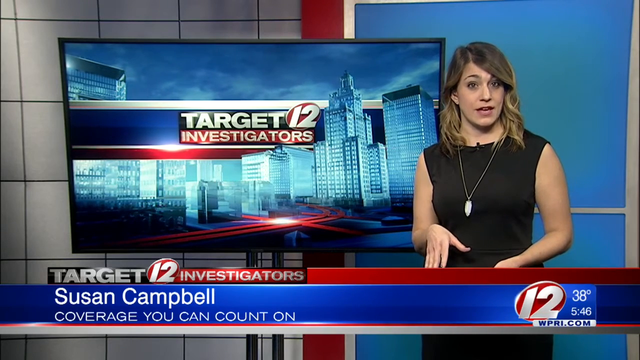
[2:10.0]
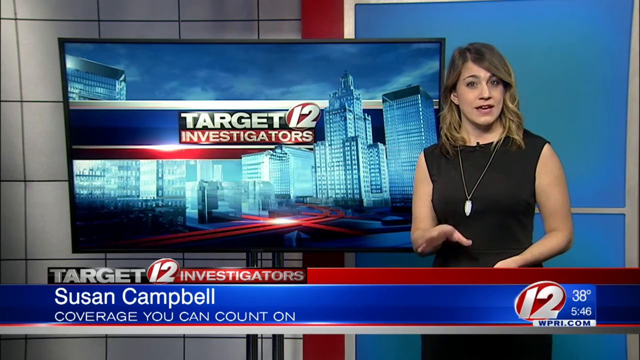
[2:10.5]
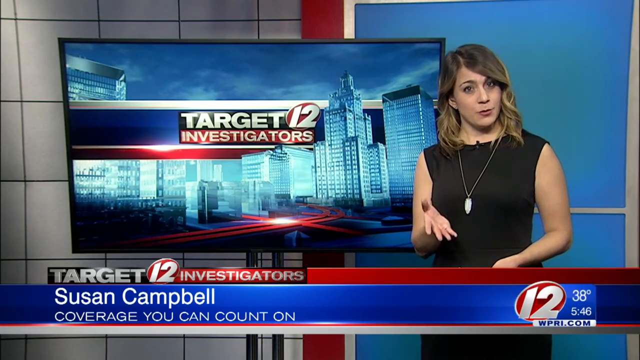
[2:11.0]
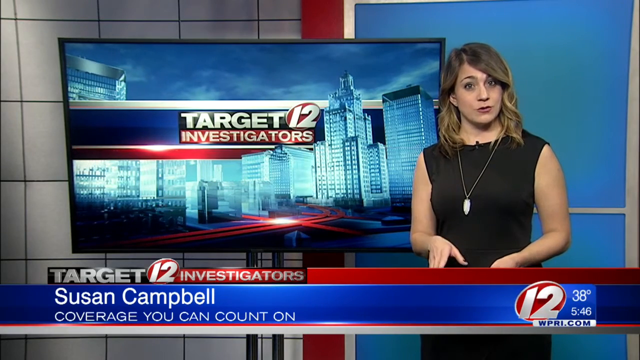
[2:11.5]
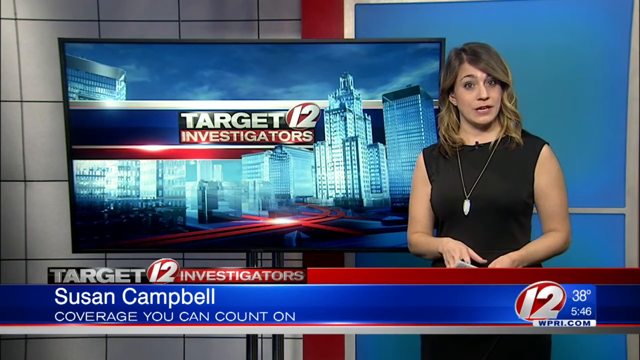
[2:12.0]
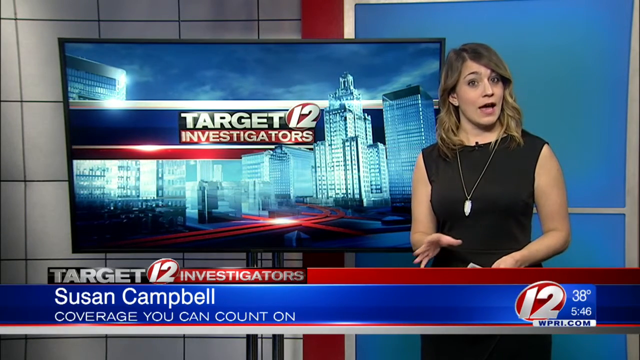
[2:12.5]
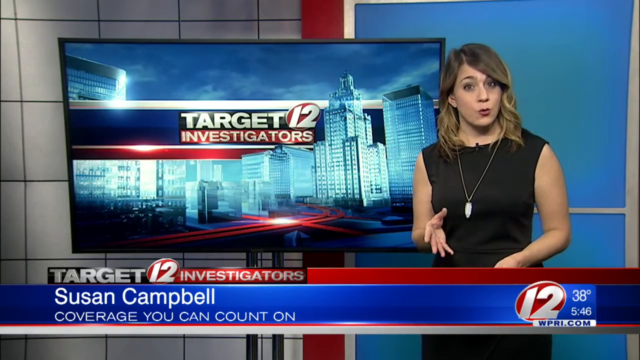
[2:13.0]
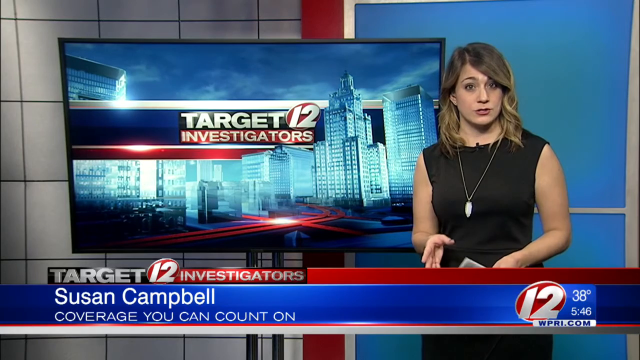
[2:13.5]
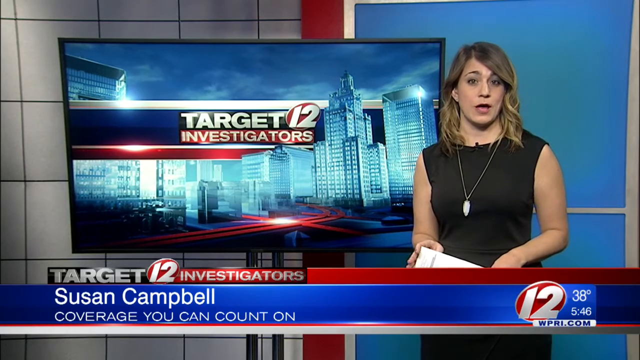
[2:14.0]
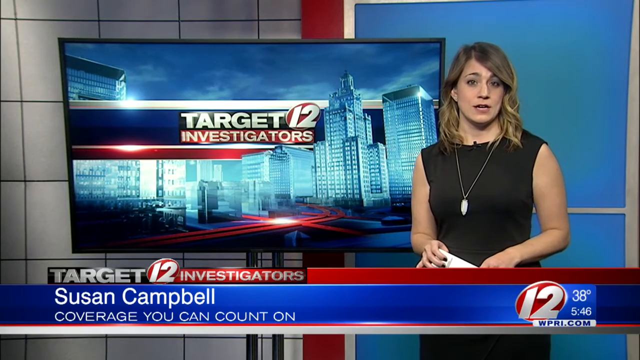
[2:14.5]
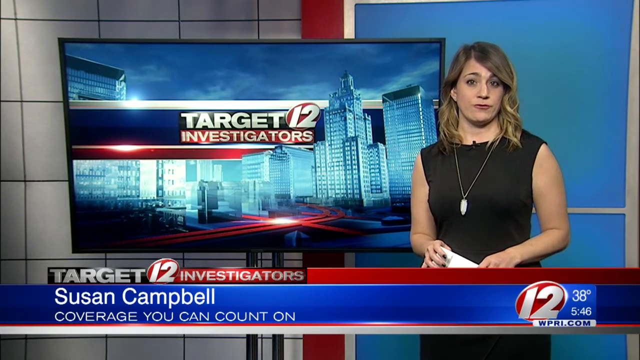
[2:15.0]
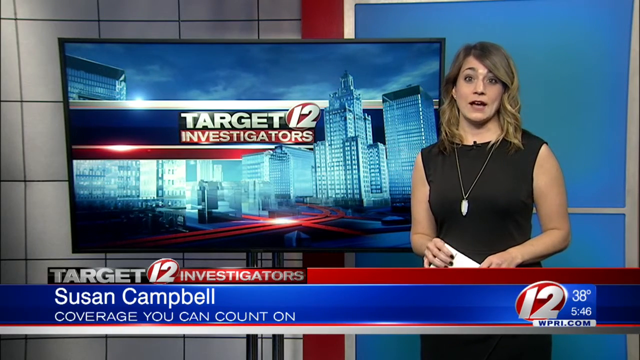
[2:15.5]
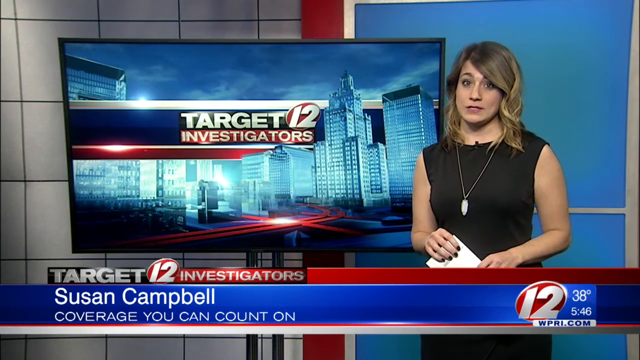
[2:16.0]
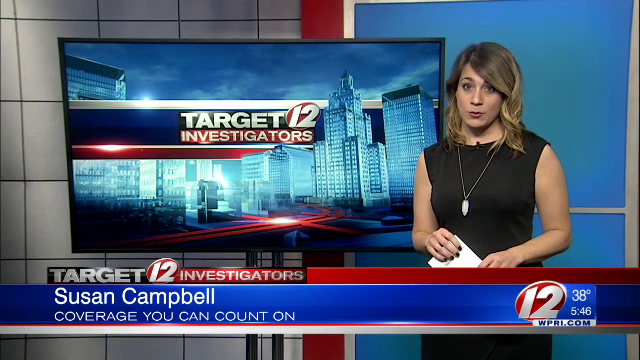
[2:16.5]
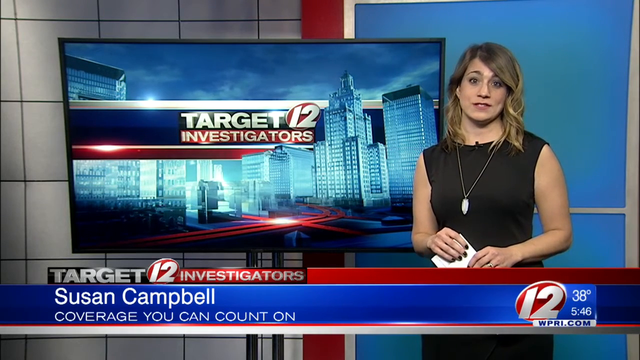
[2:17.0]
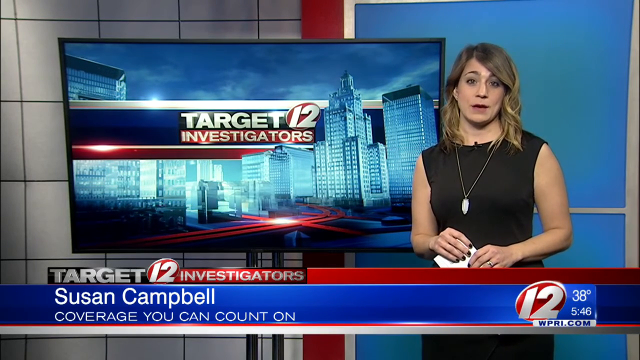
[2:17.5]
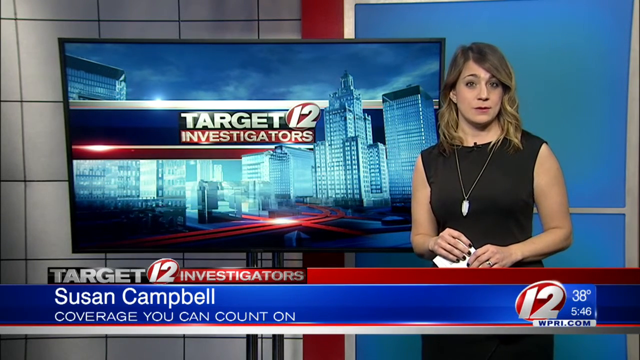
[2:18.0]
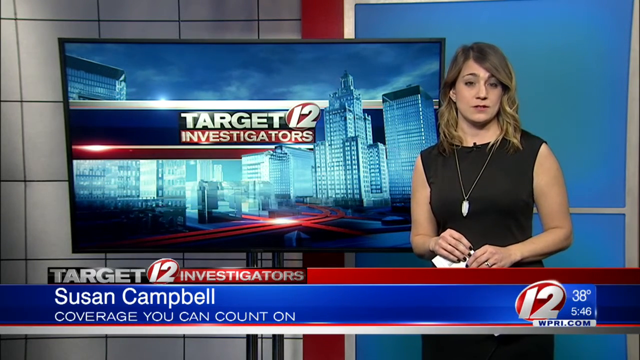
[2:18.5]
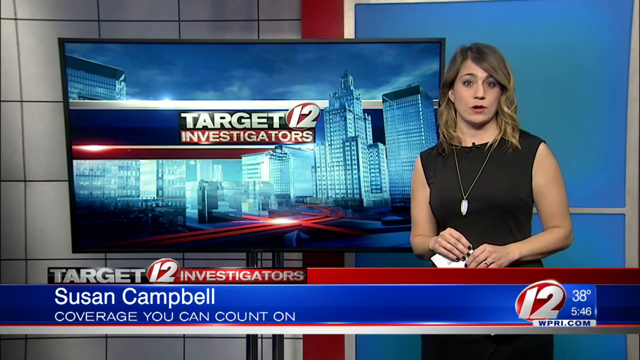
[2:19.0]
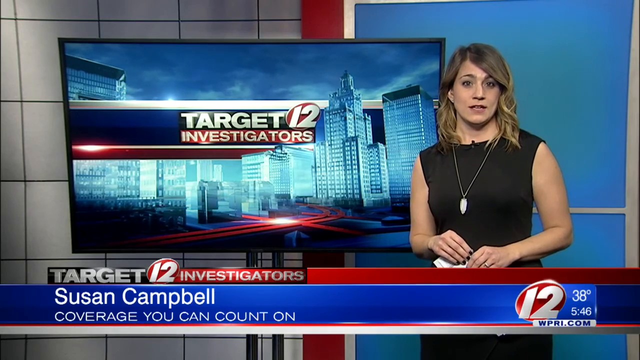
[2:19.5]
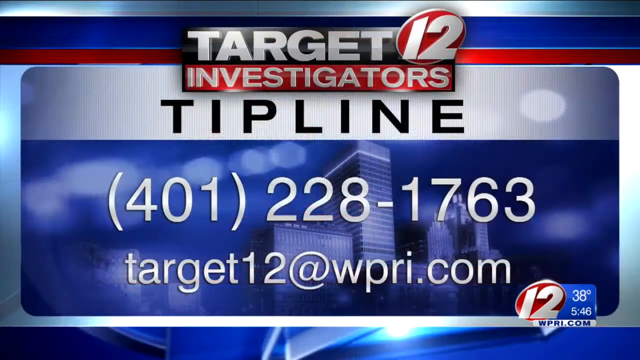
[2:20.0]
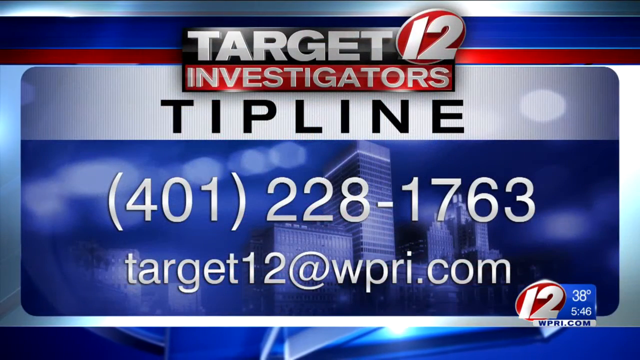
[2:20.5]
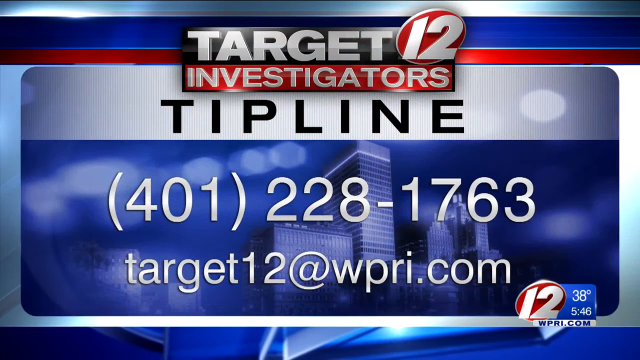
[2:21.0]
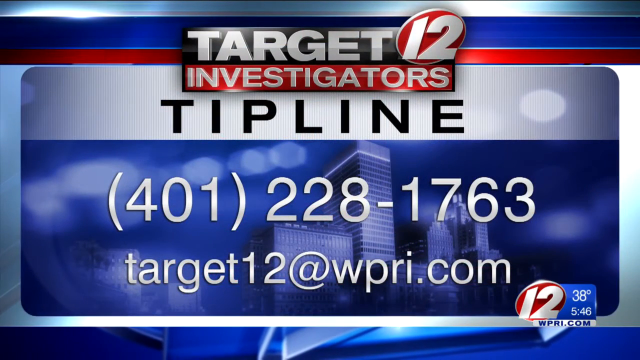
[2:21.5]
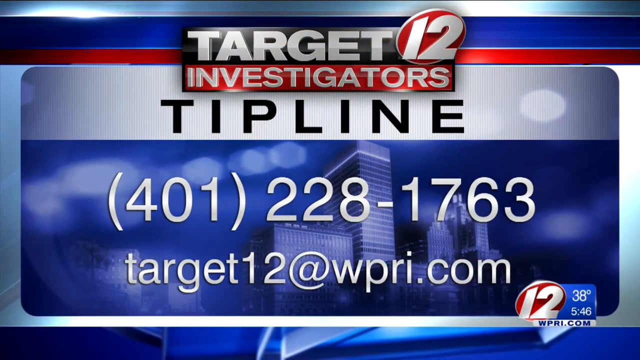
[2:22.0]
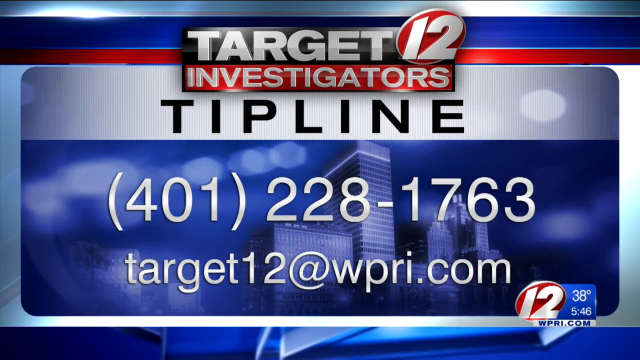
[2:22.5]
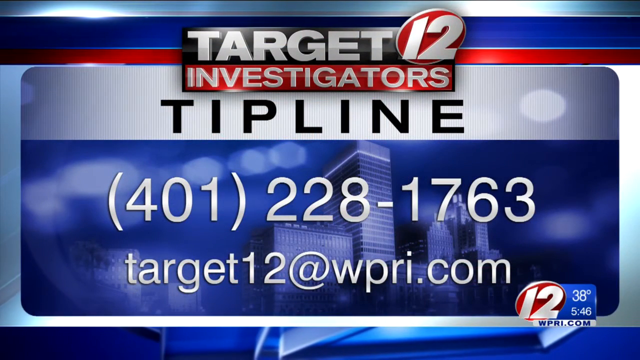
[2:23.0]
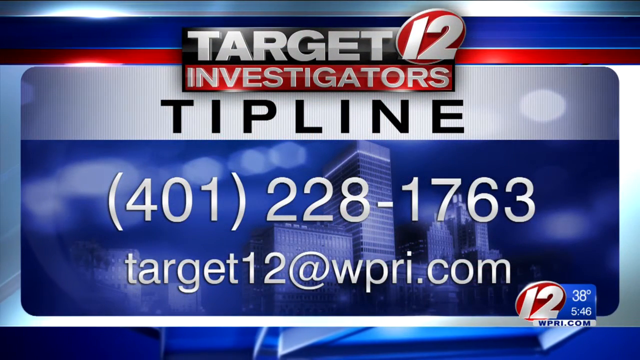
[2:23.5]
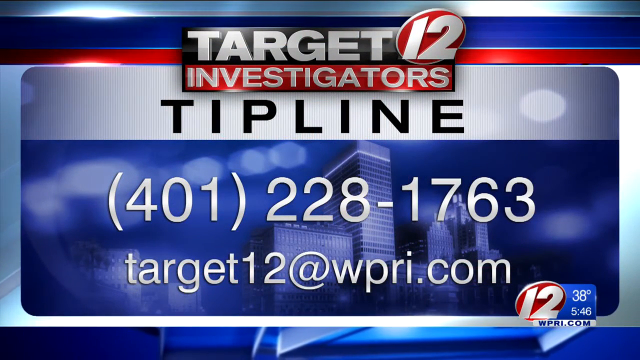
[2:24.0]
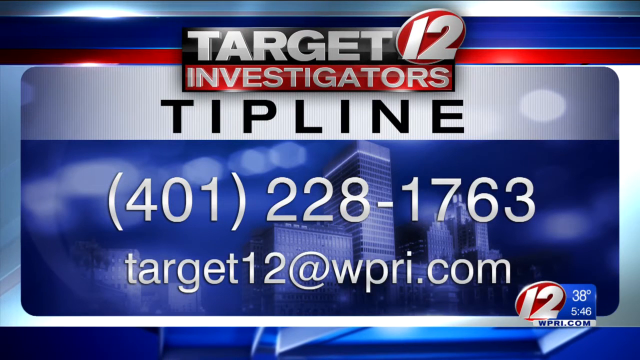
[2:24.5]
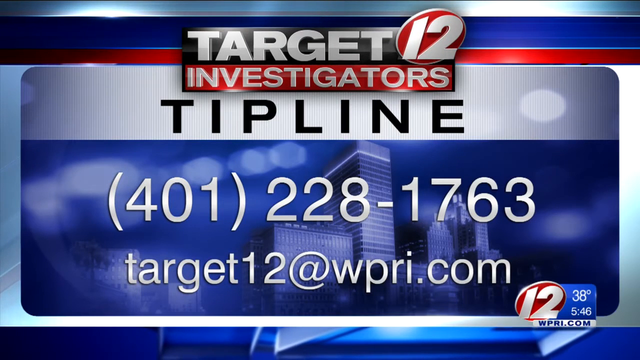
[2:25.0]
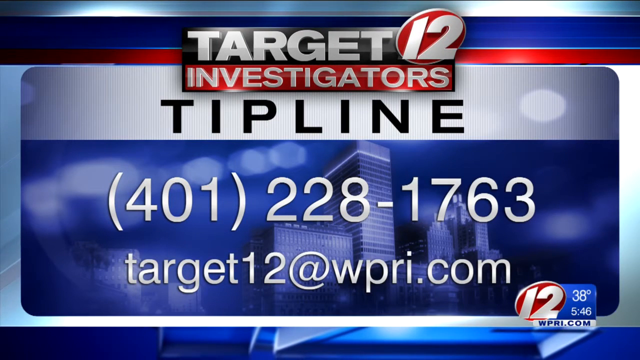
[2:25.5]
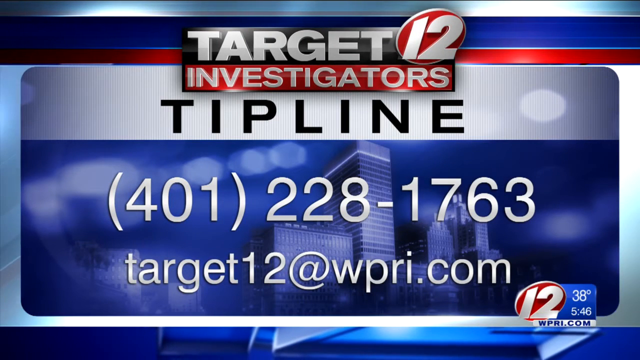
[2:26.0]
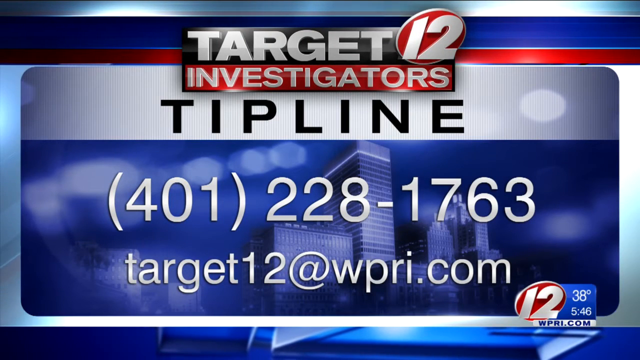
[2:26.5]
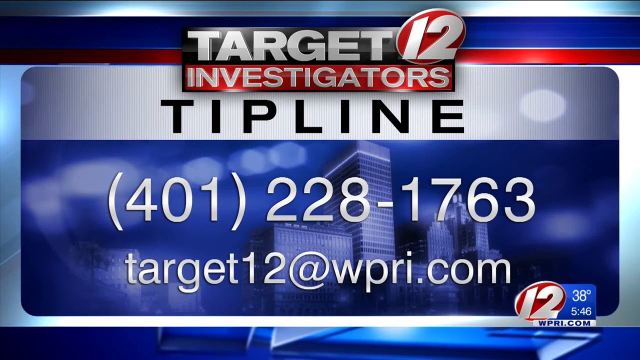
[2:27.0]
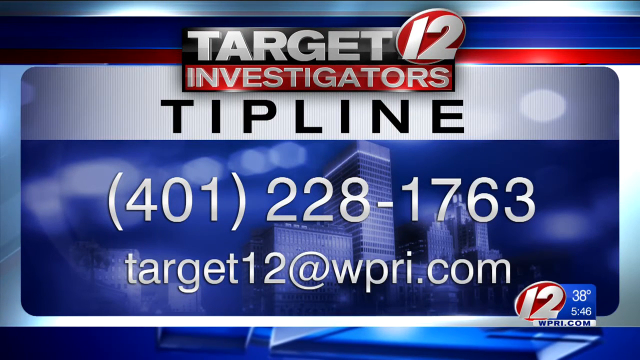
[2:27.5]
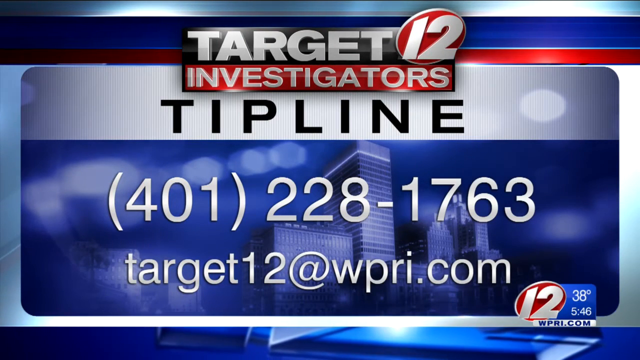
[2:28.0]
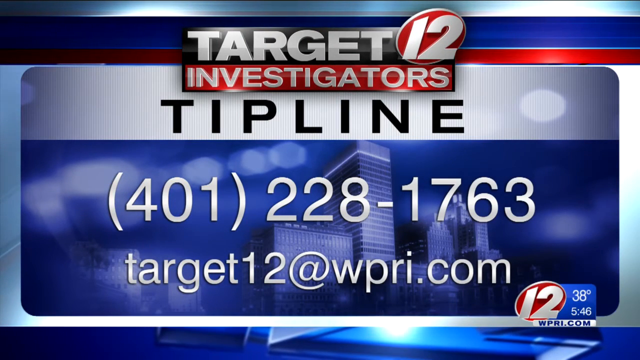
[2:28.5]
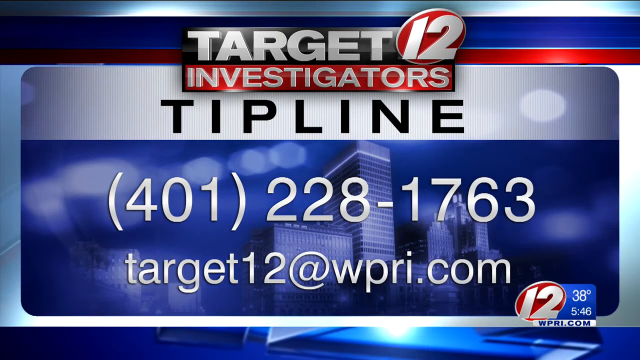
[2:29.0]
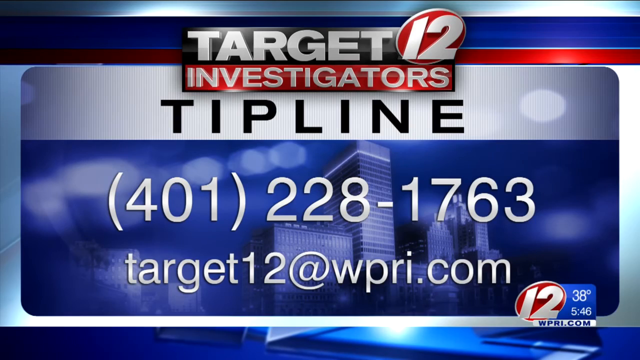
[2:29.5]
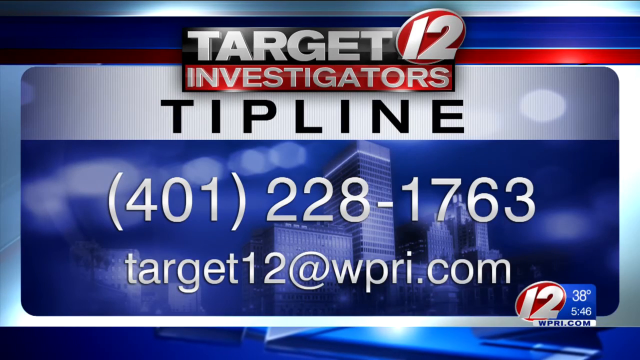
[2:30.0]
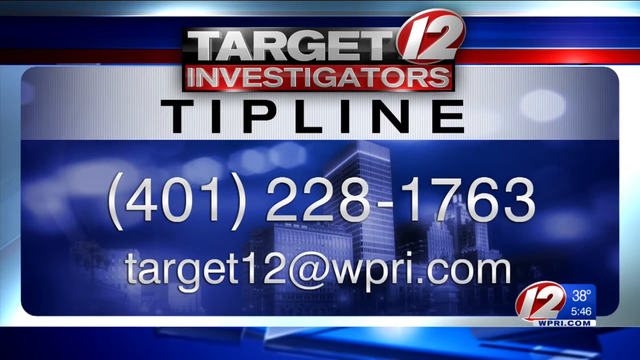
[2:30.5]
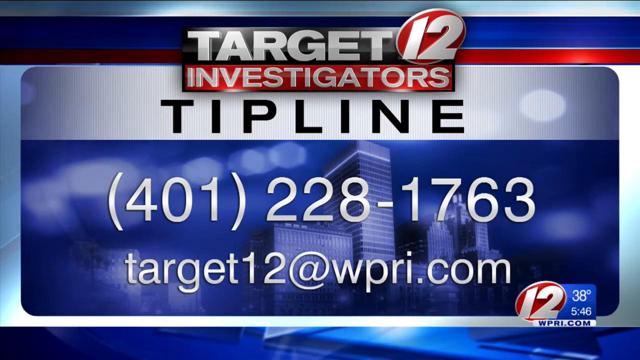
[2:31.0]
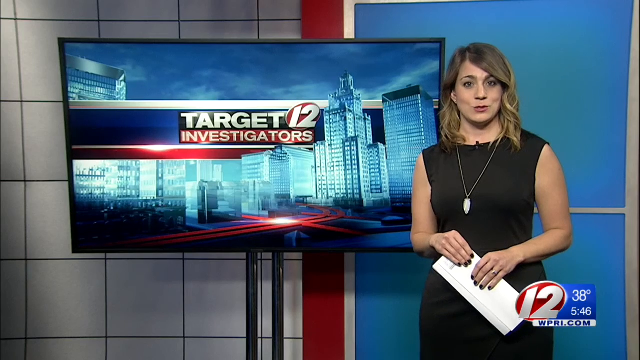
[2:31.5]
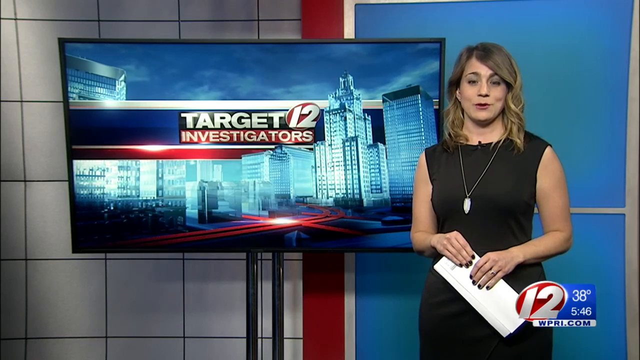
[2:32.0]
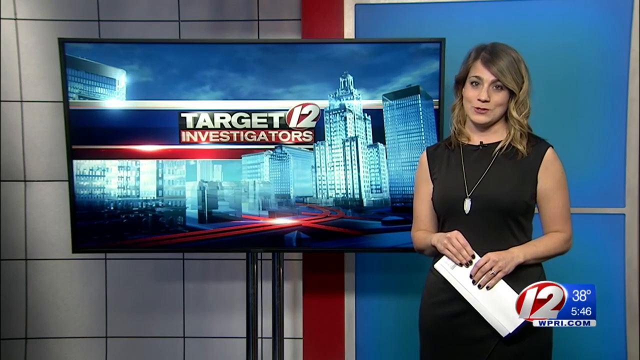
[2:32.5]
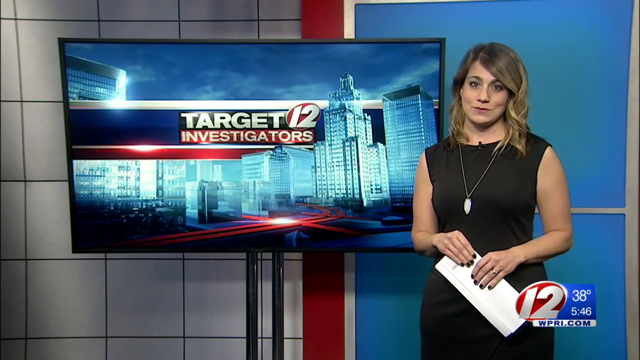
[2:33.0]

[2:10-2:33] The woman stands to the right side of the television, possibly still wrapping up her story. She gestures toward the camera with her right hand, fingers spread wide apart, as if explaining something, then handles a white paper between both hands. She continues to nod toward the camera with a serious look on her face, nodding a couple more times. The video then cuts to a static image that says "target 12 investigators" at the top, with a tip line phone number and an address, "target12@WPRI.com," below it; it seems to be a tip line for contacting the station with information about its investigations. The image lingers for a number of seconds, then quickly cuts back to the news anchor standing to the right of the television. She seems to be holding a folded paper in both hands out in front of her abdomen, and she nods a bit, tilting her head to the right.